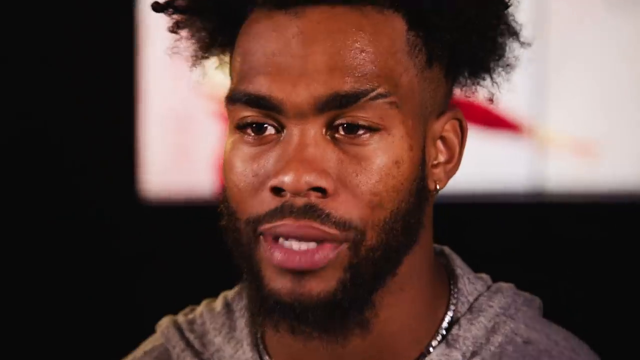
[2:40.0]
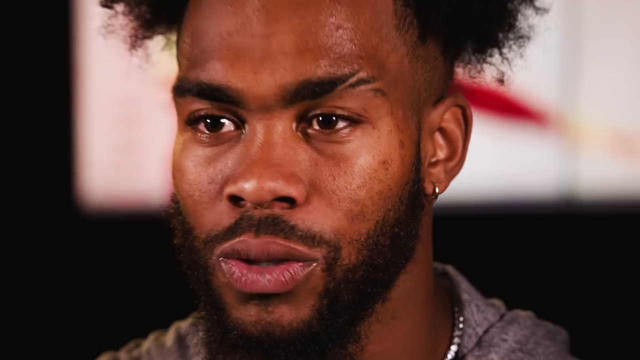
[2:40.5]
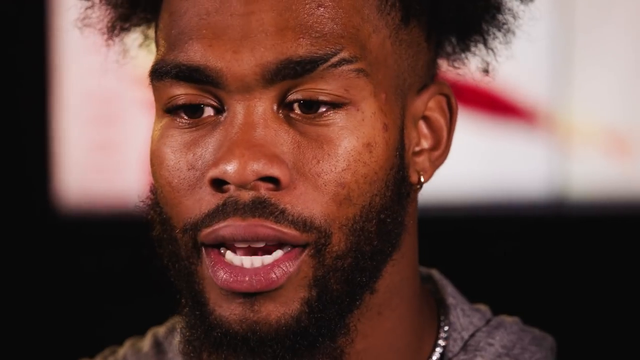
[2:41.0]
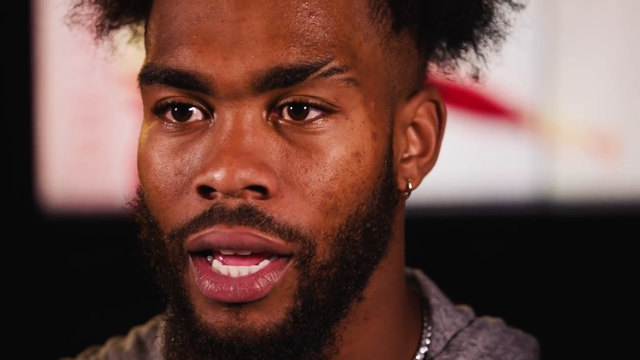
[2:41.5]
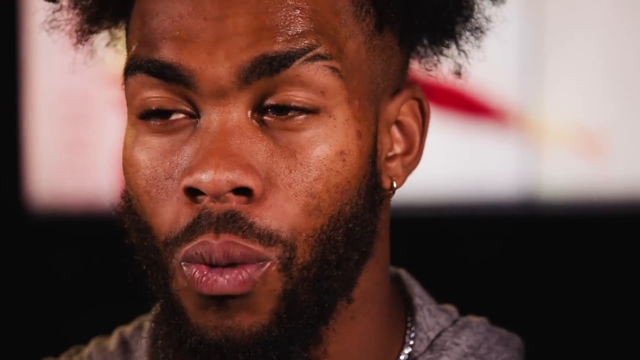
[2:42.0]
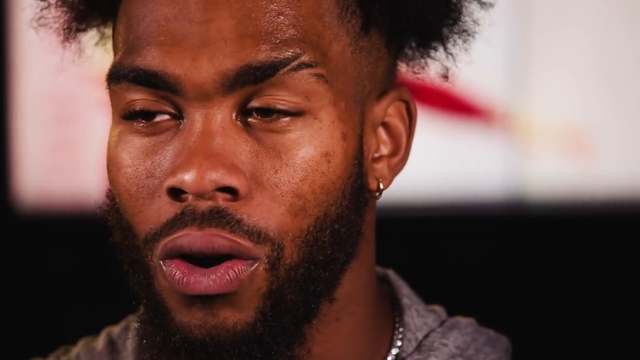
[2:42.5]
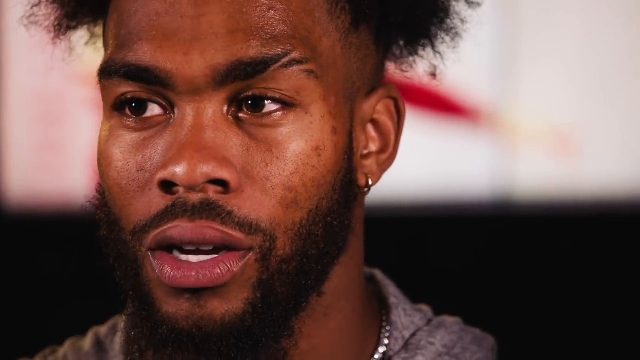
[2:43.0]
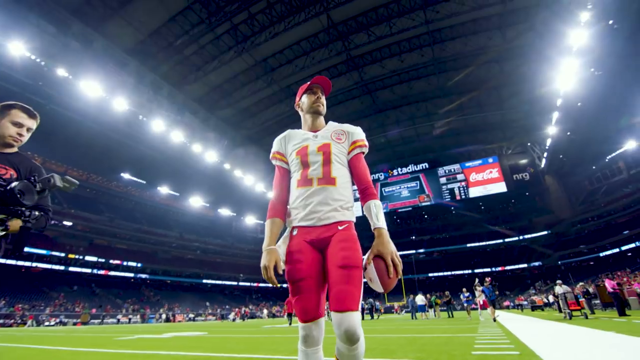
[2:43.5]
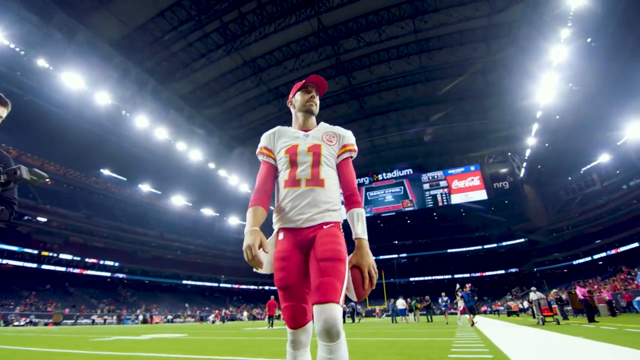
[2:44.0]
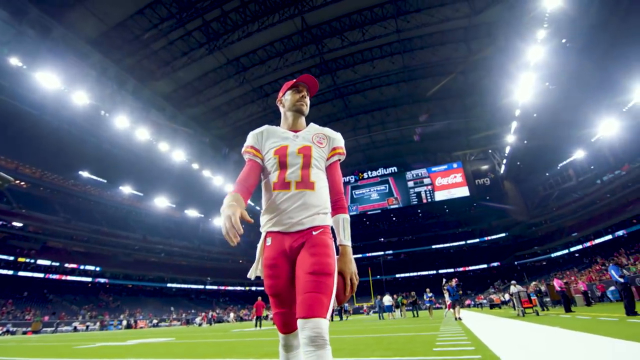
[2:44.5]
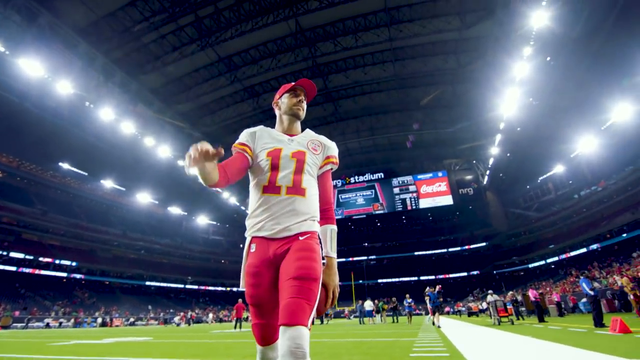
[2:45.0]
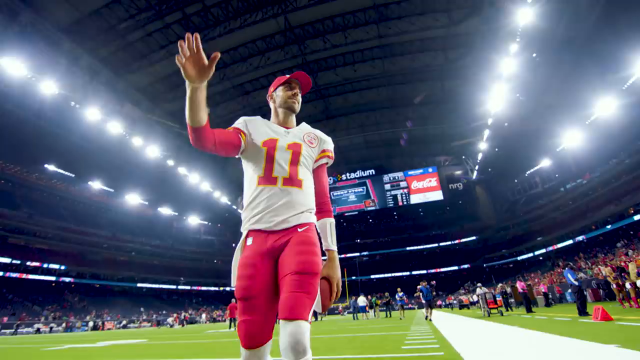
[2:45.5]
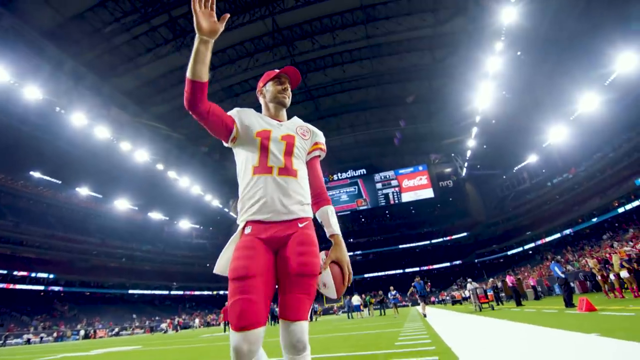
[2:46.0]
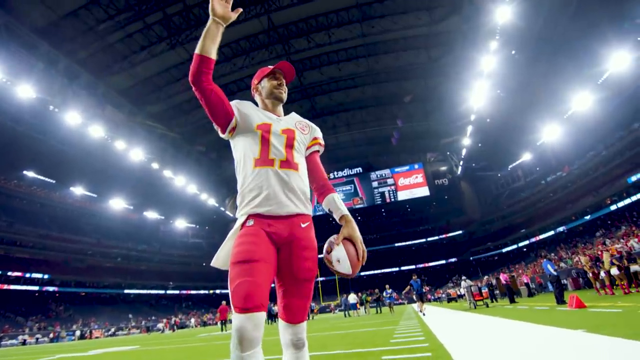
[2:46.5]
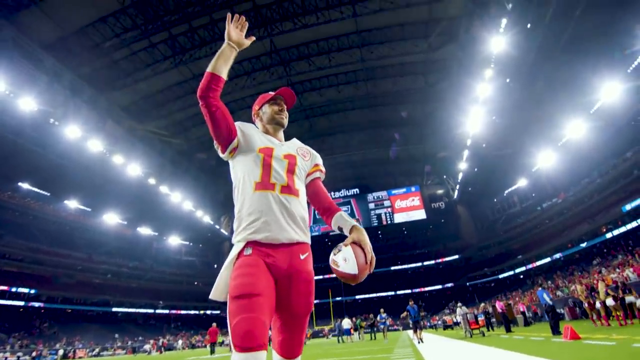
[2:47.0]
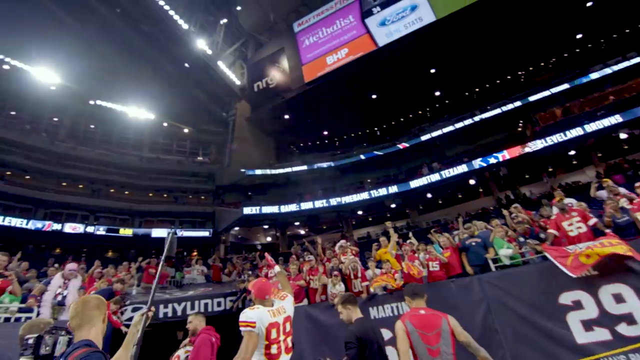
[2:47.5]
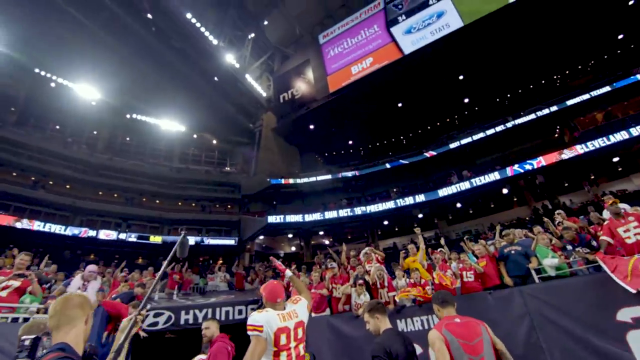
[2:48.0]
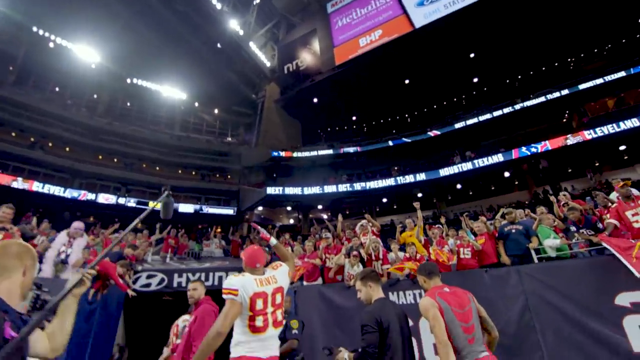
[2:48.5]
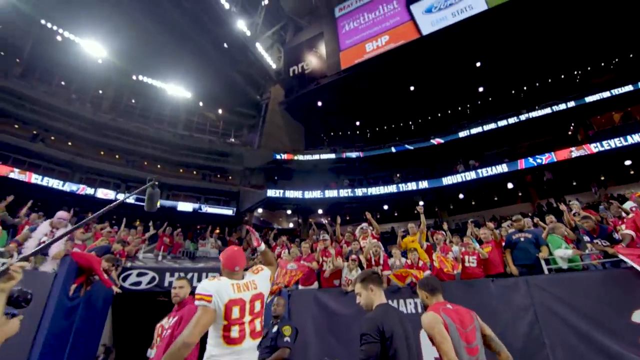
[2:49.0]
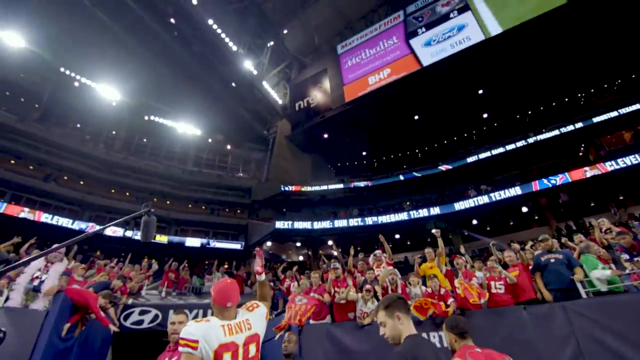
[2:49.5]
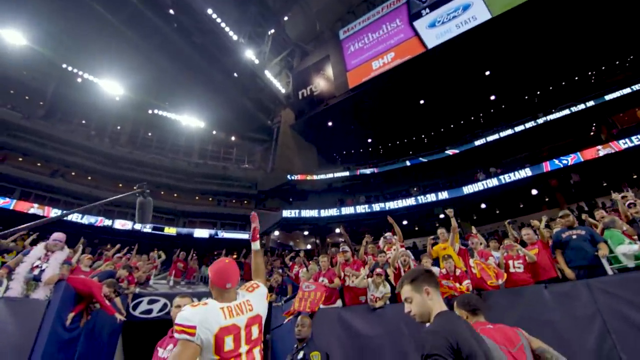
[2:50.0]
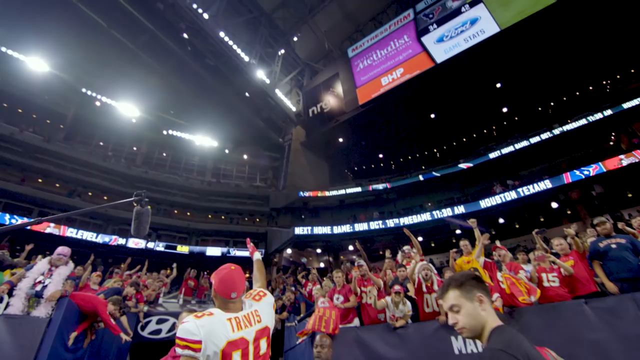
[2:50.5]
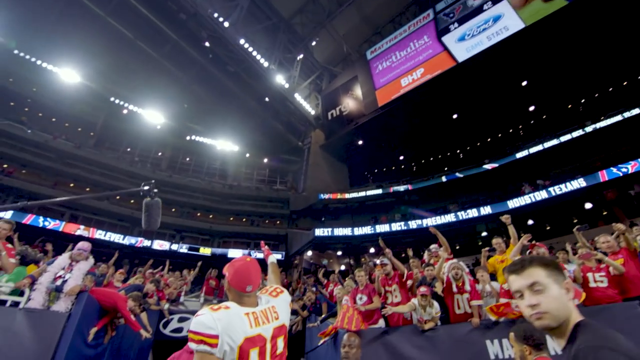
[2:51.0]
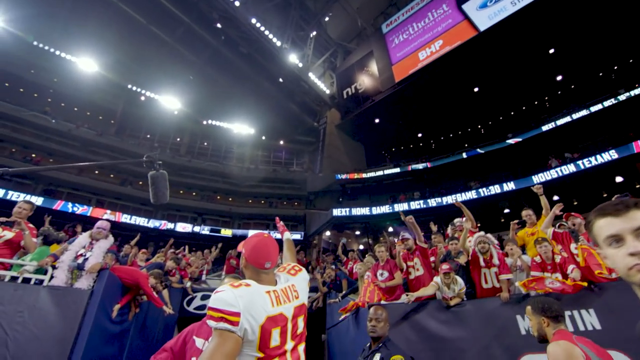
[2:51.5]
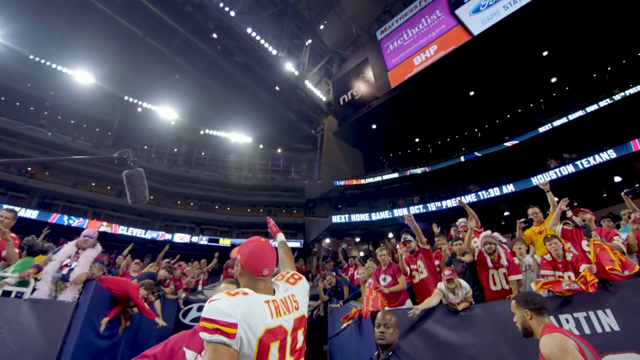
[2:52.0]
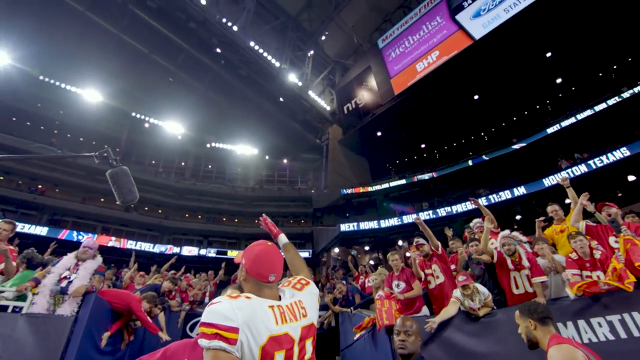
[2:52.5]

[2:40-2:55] Chitandric West speaks to the camera, looking more subdued and less celebratory, this time looking forward but slightly to the left-hand side of the screen. A player in the central foreground wears a white shirt with the number 11, red pants and a red peaked cap, with a kind of panoramic view of the stadium, its roof and the crowds in the background. It seems a more subdued moment. He raises his right arm, possibly to acknowledge the crowd, and holds the football in his left hand. Other shots show players acknowledging the crowd's support. An individual who appears to be wearing 88, possibly with Travis on his back, is right up towards the barrier acknowledging the crowd, who are dressed in various colors, many in Kansas City Chiefs colors, and celebrate with him.